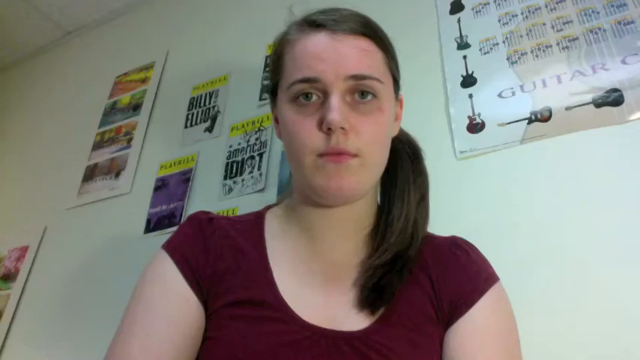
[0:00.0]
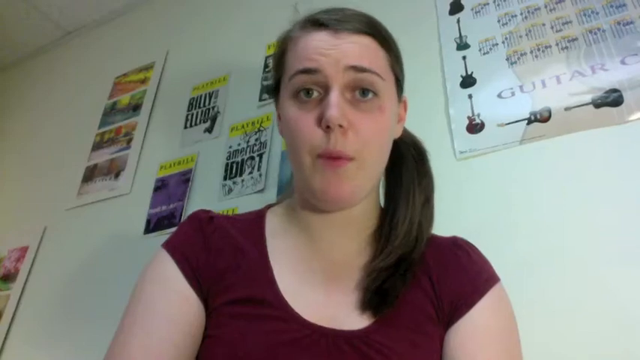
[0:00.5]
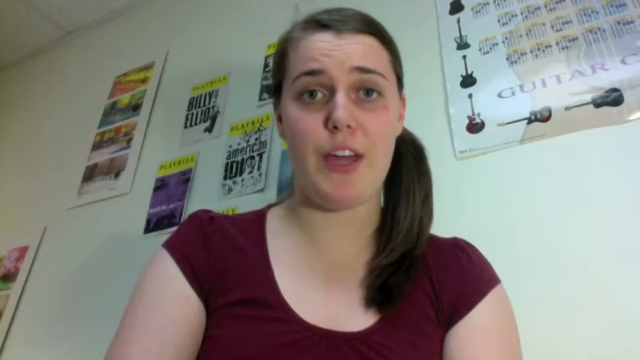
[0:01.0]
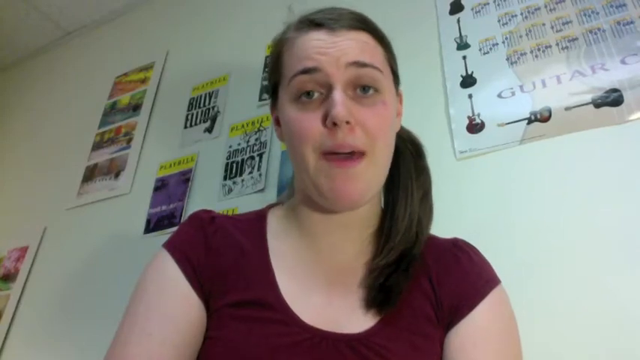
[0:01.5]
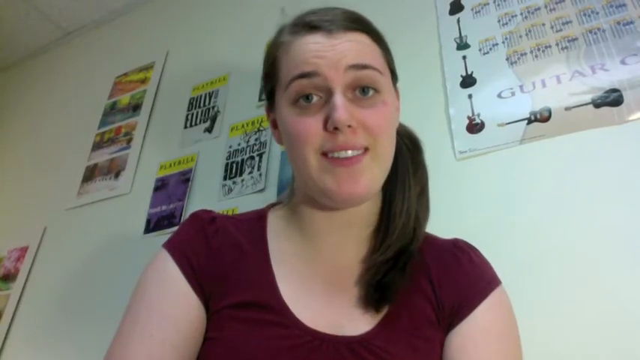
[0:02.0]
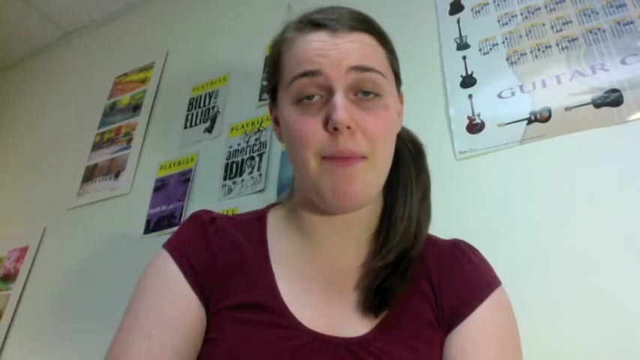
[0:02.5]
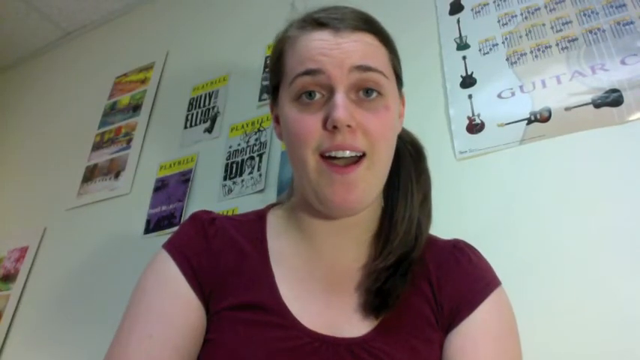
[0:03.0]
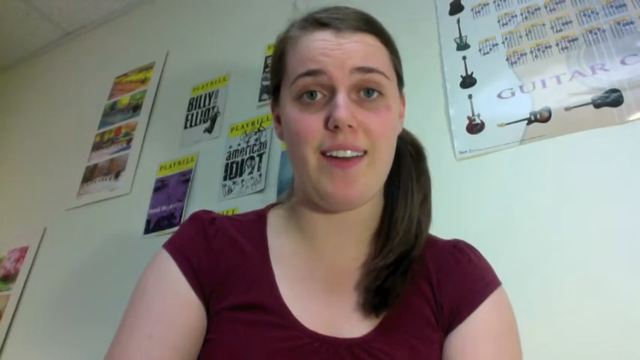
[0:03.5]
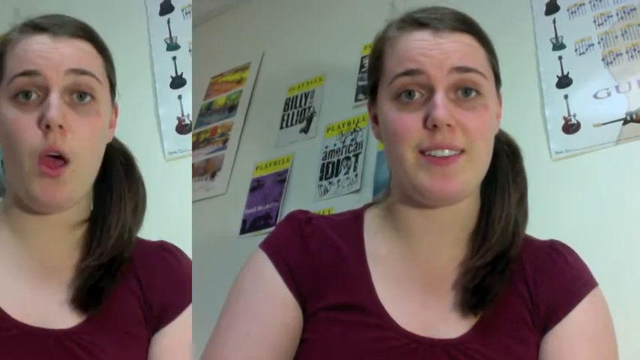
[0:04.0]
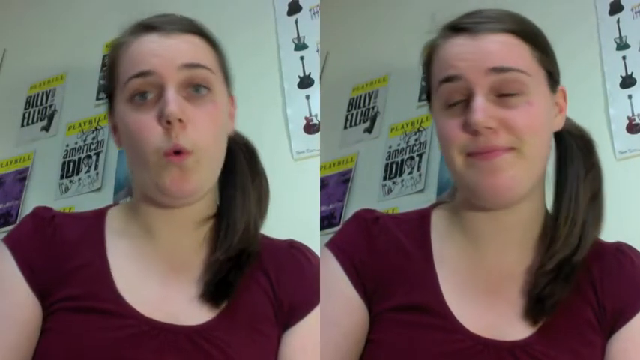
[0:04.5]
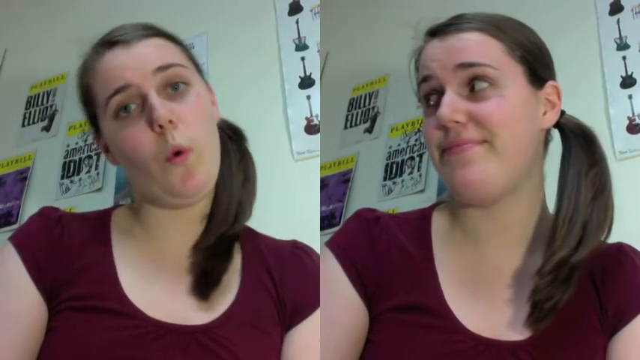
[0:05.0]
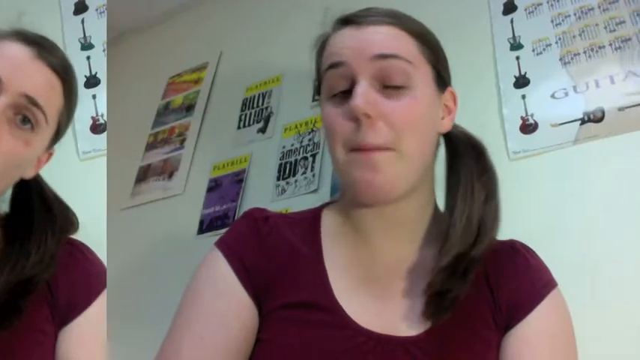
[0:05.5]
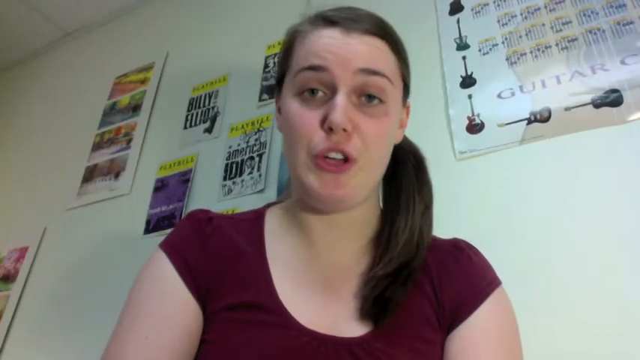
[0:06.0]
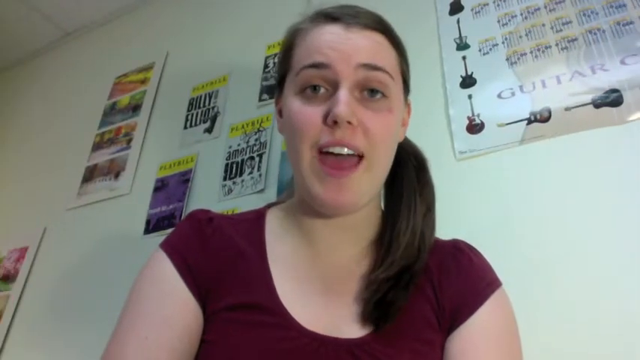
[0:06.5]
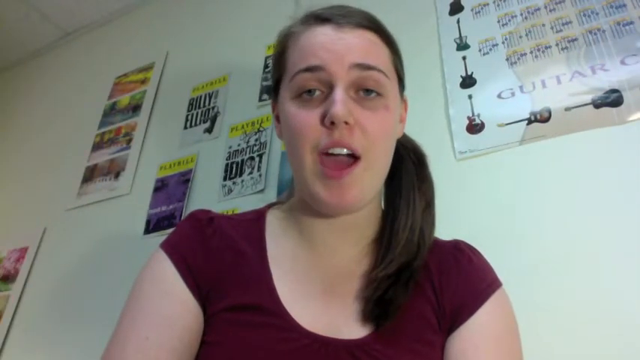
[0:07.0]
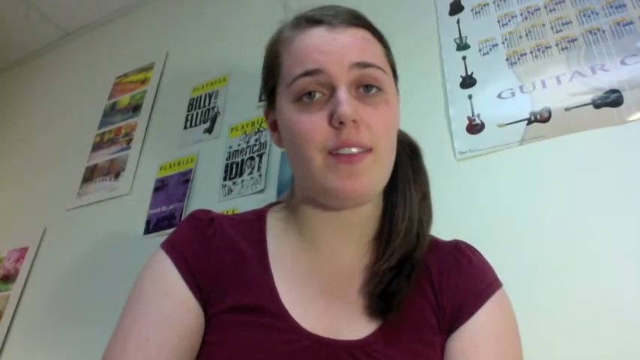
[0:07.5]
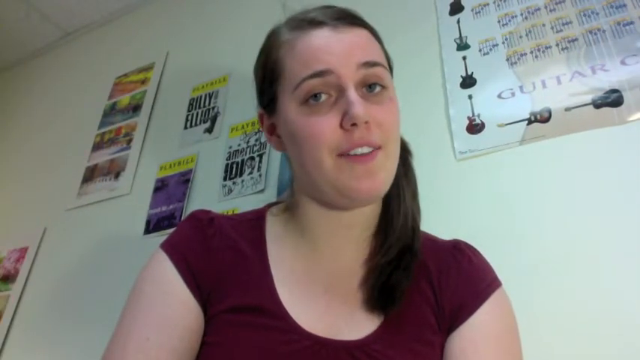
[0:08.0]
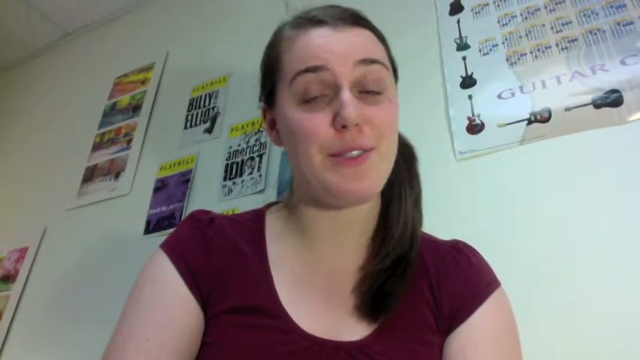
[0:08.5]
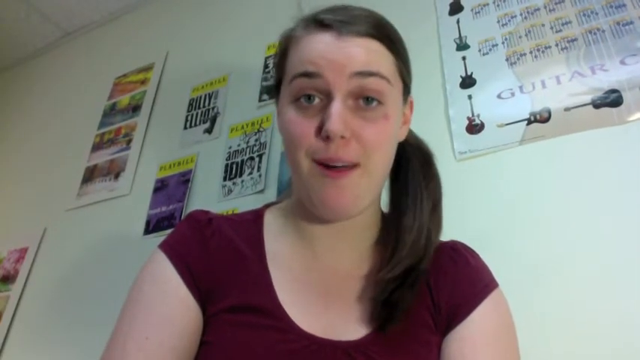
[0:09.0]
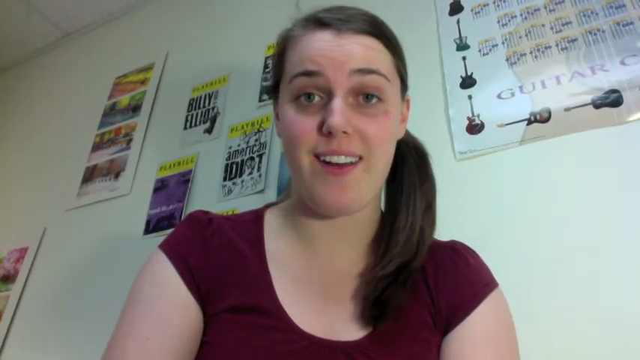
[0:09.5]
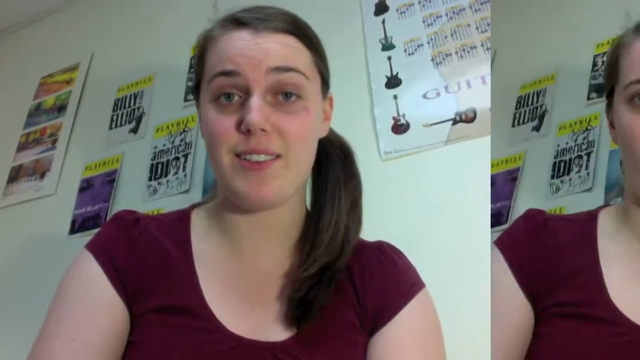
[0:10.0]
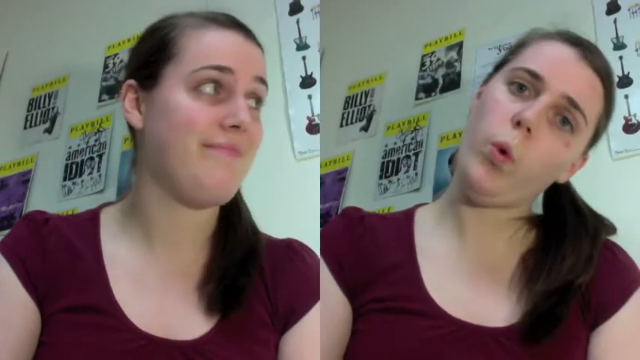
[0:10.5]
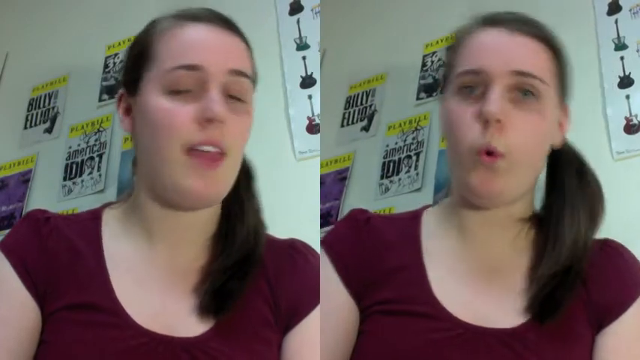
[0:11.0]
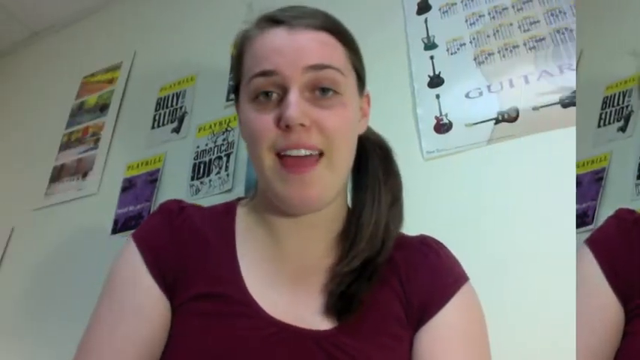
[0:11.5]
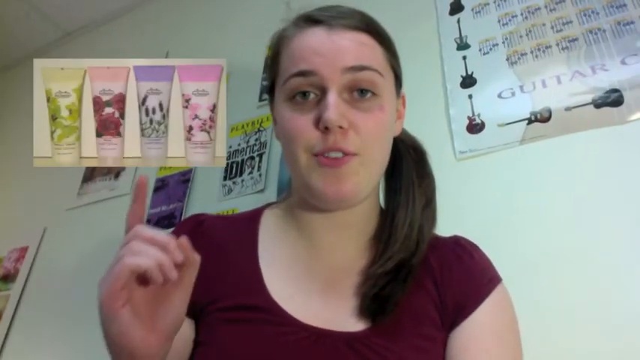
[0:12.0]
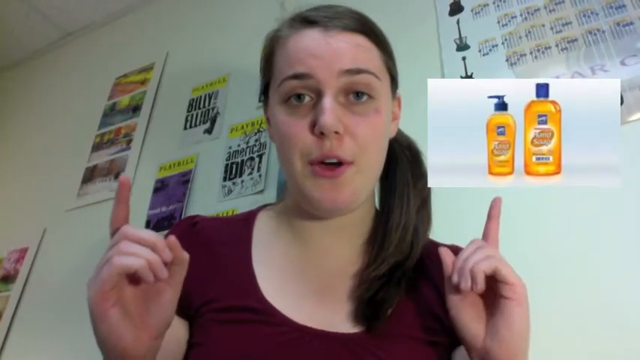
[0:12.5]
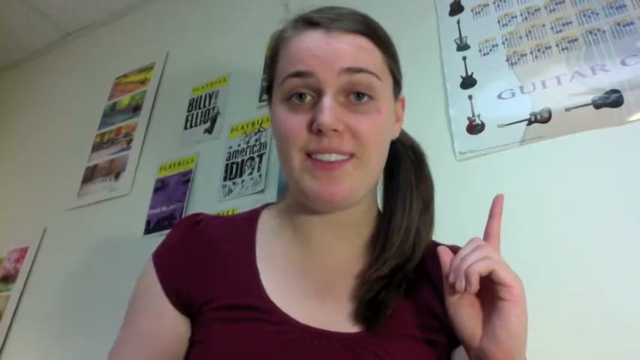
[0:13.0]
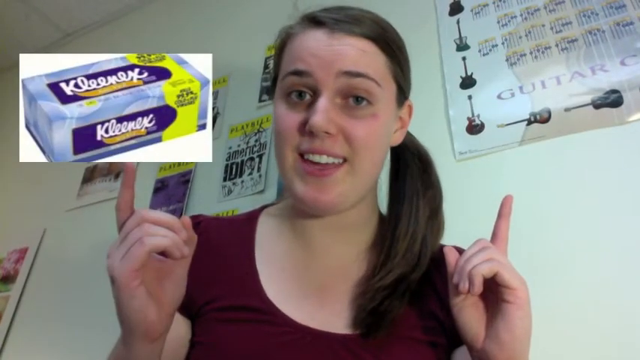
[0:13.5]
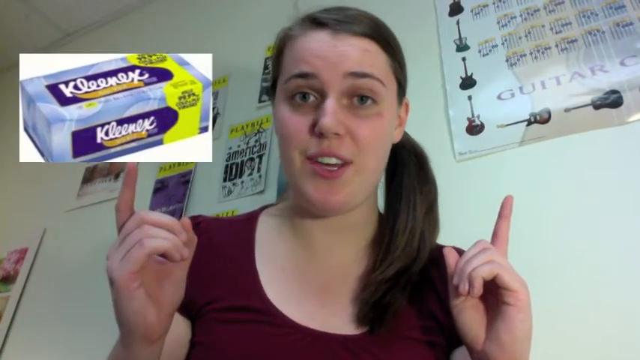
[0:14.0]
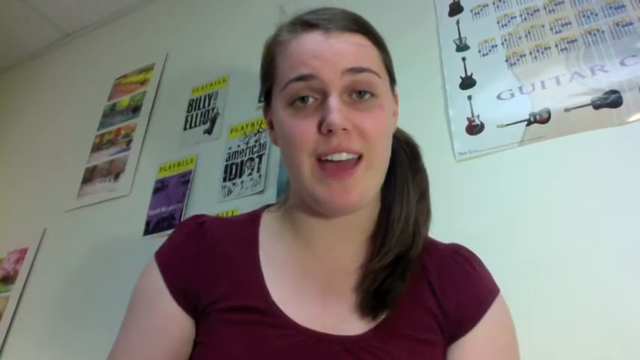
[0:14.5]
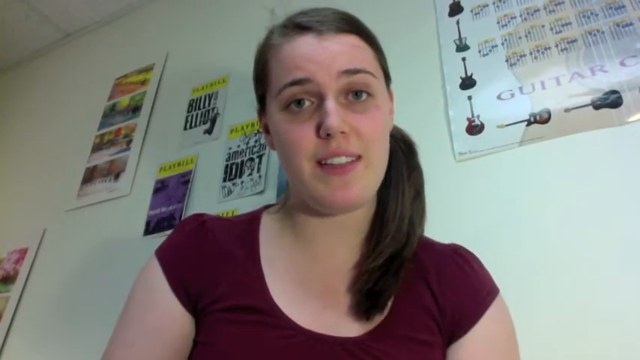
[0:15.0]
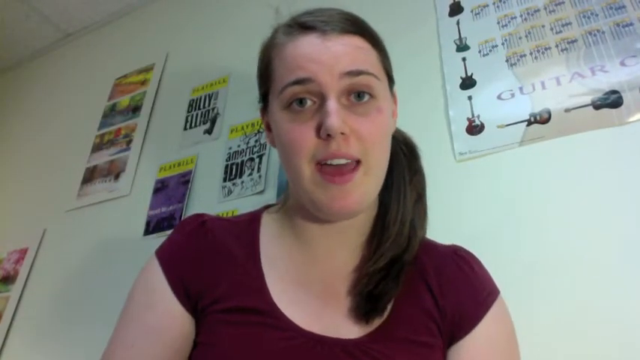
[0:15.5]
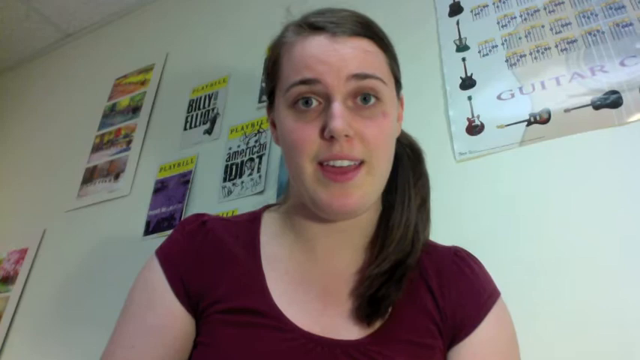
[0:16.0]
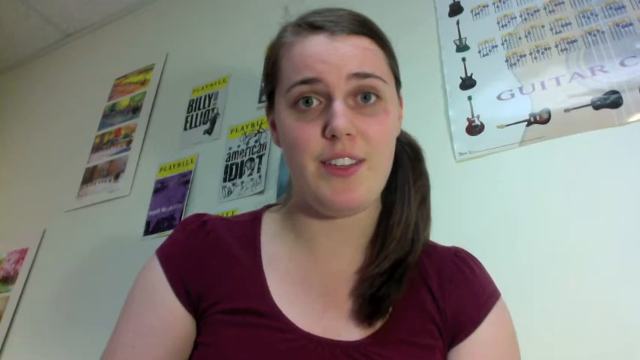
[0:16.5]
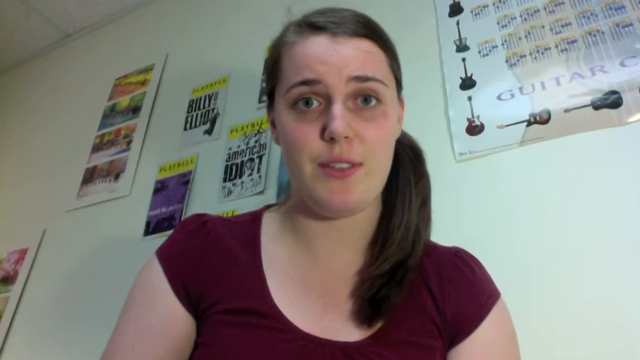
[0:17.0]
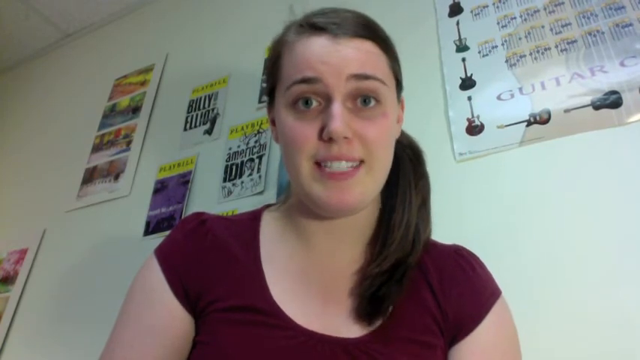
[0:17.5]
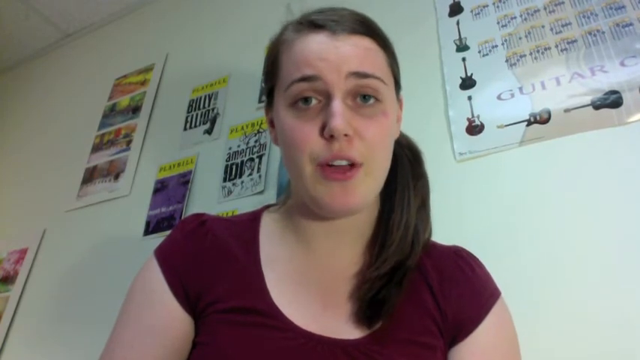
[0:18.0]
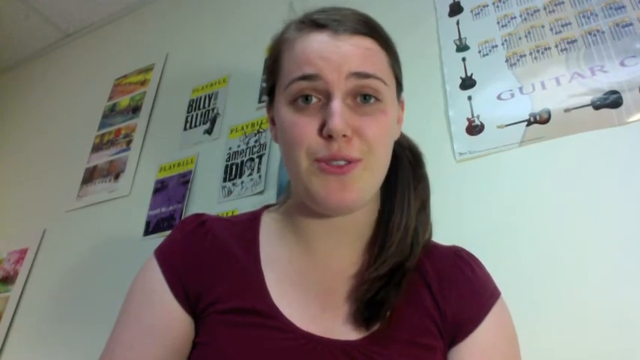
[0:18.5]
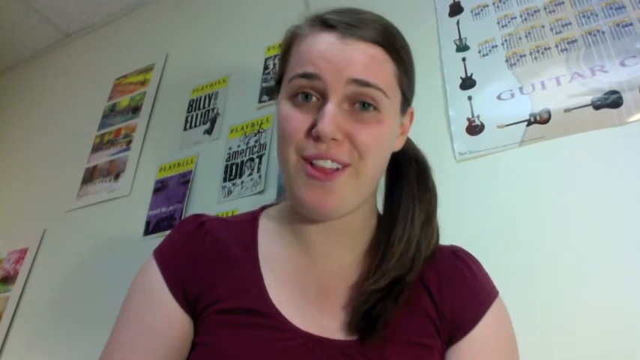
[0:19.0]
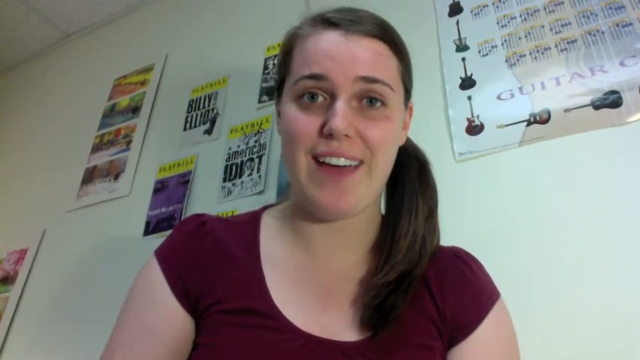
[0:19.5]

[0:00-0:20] A young girl is in what looks like either a classroom or a school room, with posters hanging on the white walls. She wears a maroon-type shirt and a side ponytail, has brown eyes and very bright teeth, and looks probably 16 to 18. While talking, she points at pictures of different types of products, including lotions and Kleenexes; the Kleenexes are in a blue box with flowers on it. Every few seconds a small pop-up video of her appears on either side of the screen for a few seconds, showing her making faces, moving her head side to side and making weird lip movements. The signs on the wall are hard to read, but there are nine of them; one has guitars on it with what looks like a calendar.